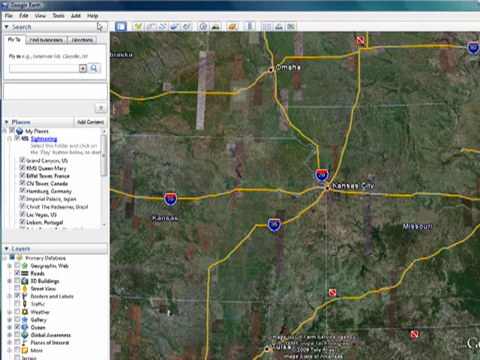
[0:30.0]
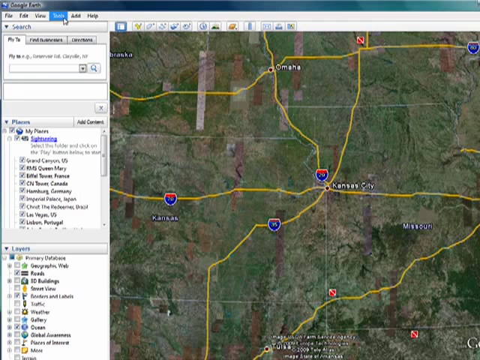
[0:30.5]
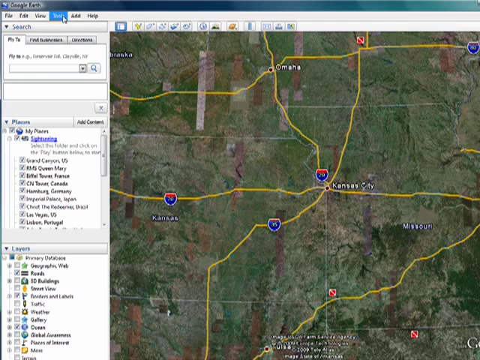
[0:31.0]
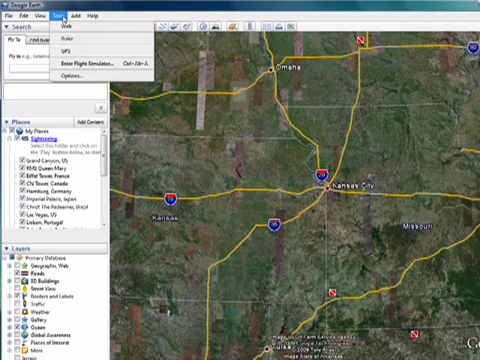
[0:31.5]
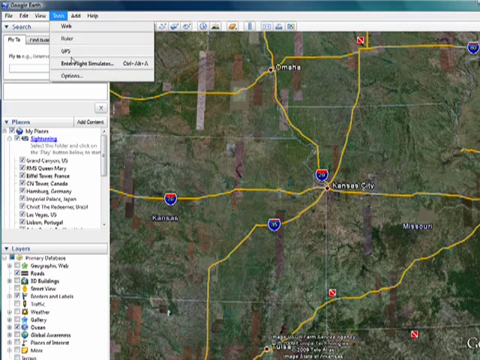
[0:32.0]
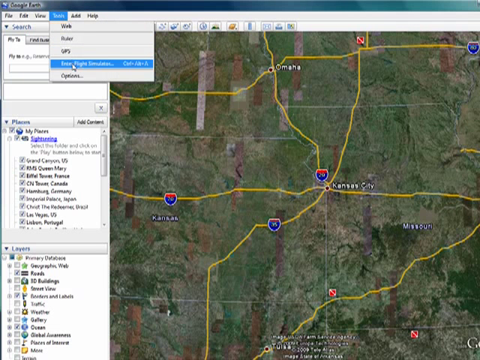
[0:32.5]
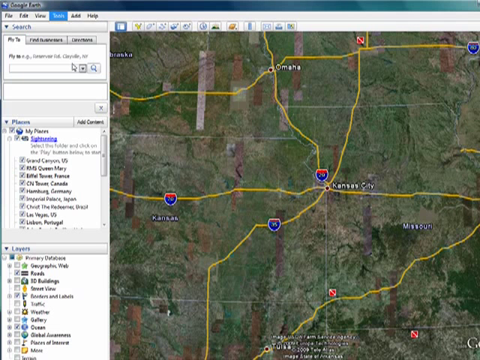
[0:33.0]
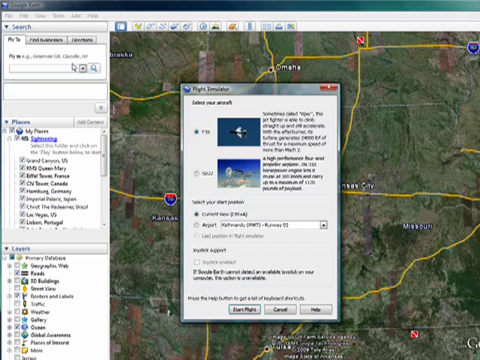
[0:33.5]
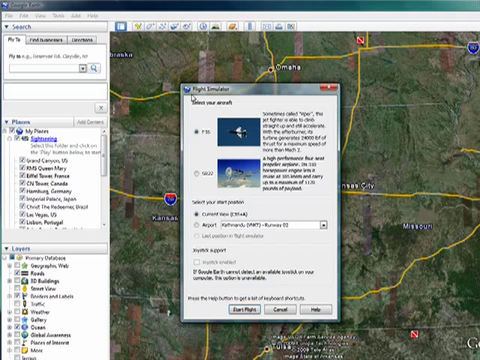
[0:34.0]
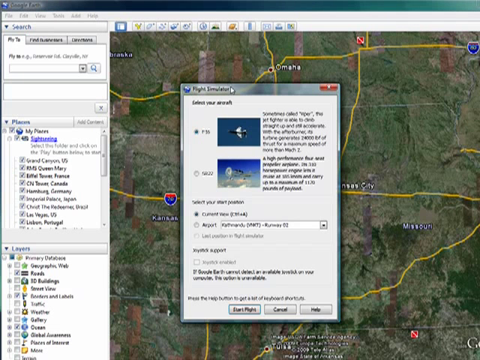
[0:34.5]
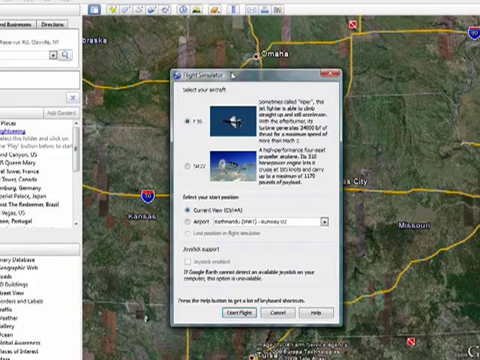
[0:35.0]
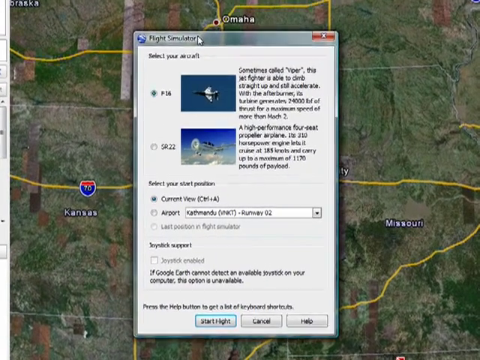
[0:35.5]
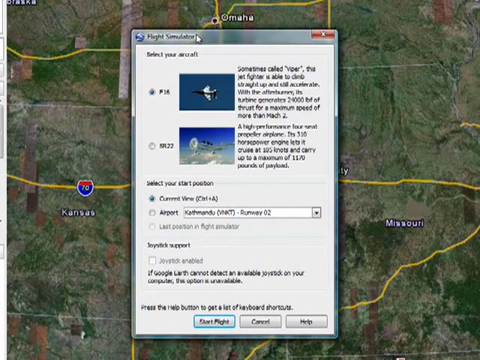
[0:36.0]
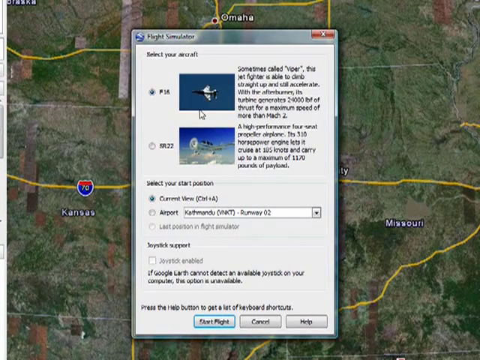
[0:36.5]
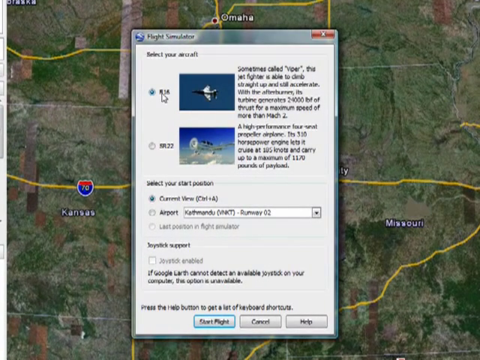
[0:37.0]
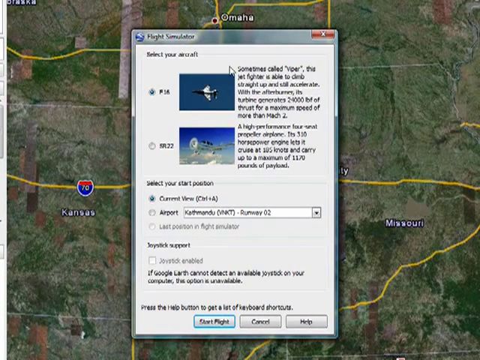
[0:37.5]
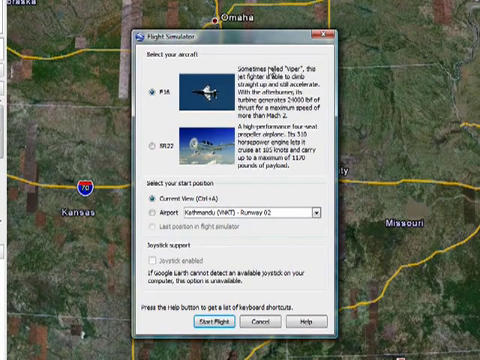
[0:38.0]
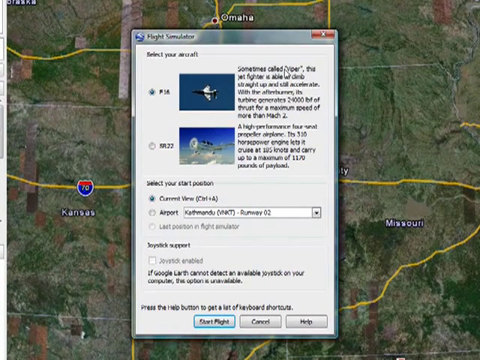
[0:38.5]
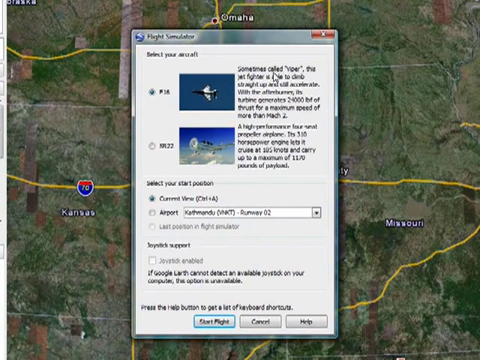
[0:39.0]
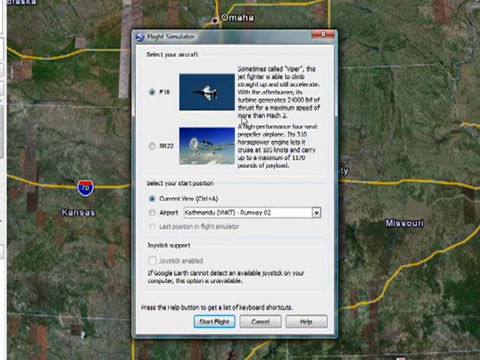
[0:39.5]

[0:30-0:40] The user goes up to the menu in the top left of the screen, clicks on what is apparently the table option, and then clicks on flight simulator. The screen that appears has two options: one seems to be some kind of jet fighter and the other seems to be a slower, more relaxed kind of plane. There is a description of both planes in this menu, though it cannot be read exactly; one of them apparently contains the speed and the height at which the plane flies.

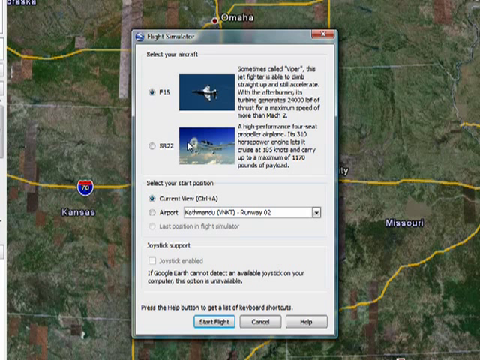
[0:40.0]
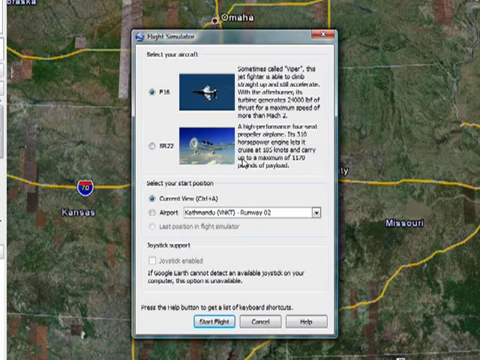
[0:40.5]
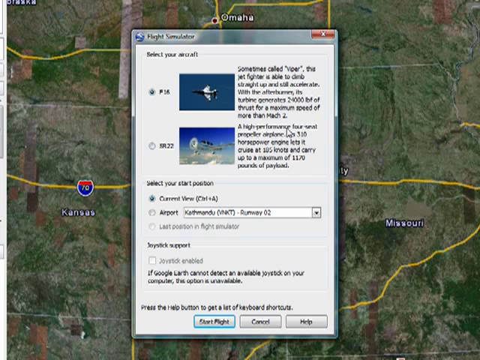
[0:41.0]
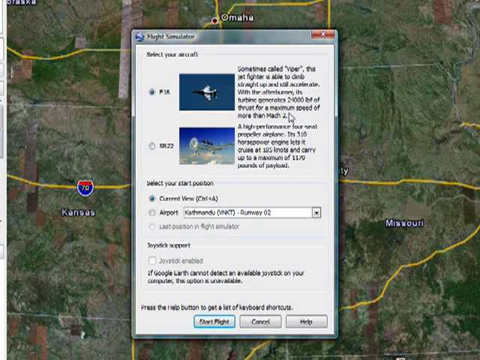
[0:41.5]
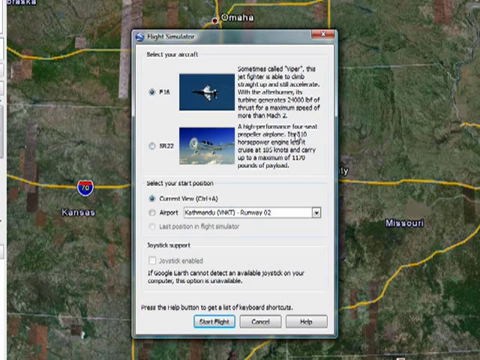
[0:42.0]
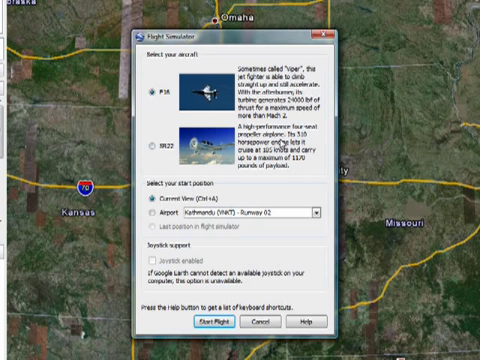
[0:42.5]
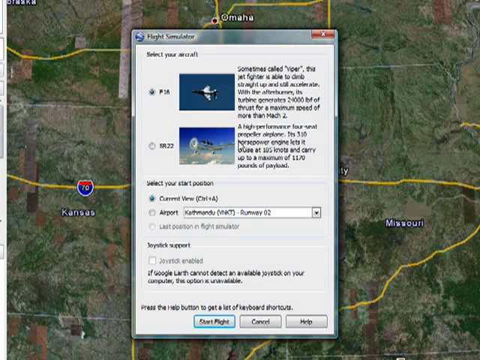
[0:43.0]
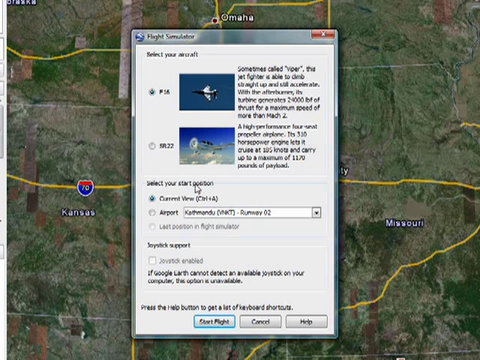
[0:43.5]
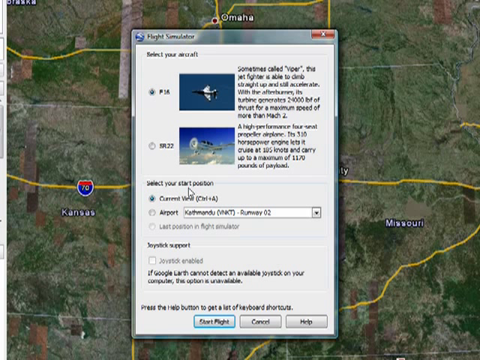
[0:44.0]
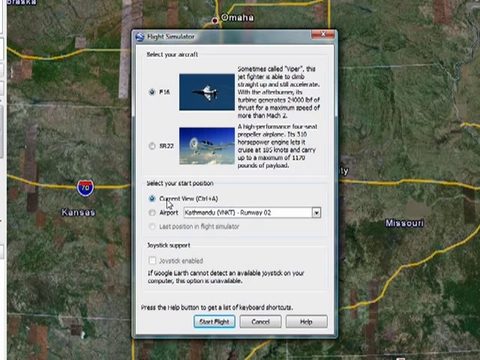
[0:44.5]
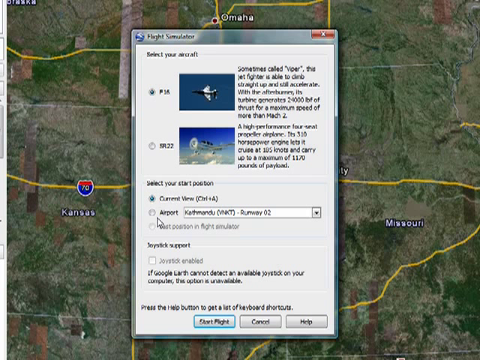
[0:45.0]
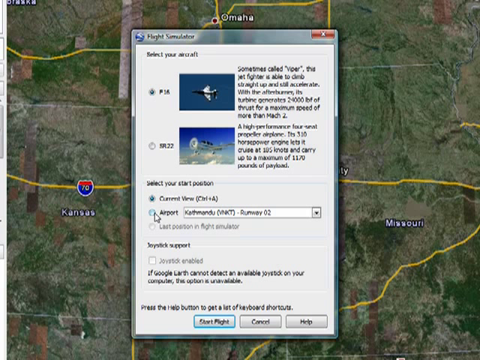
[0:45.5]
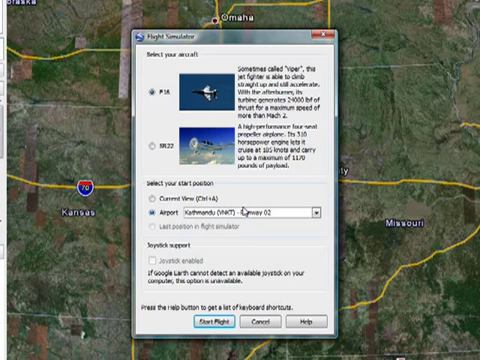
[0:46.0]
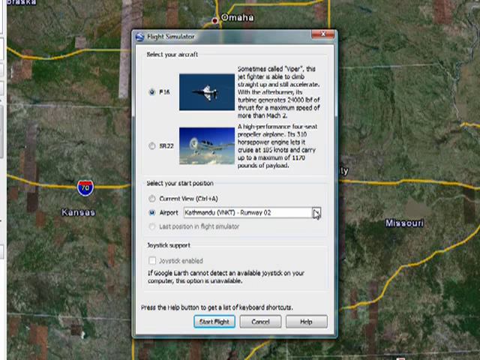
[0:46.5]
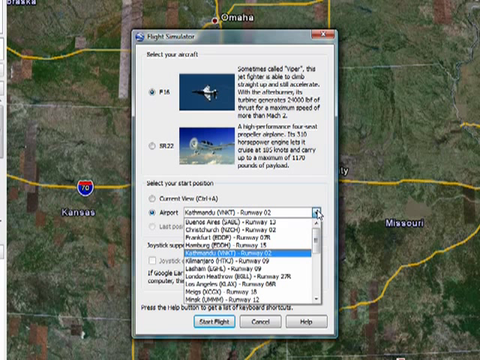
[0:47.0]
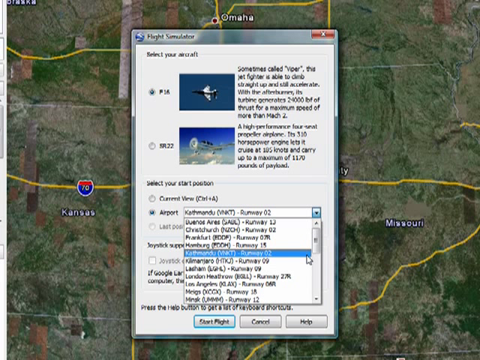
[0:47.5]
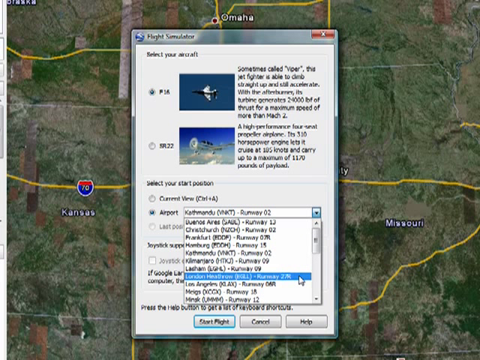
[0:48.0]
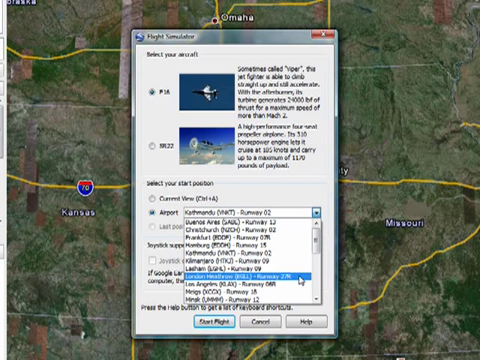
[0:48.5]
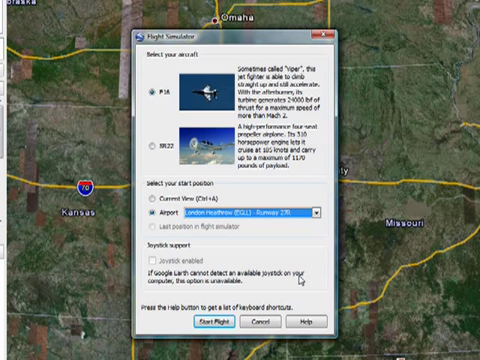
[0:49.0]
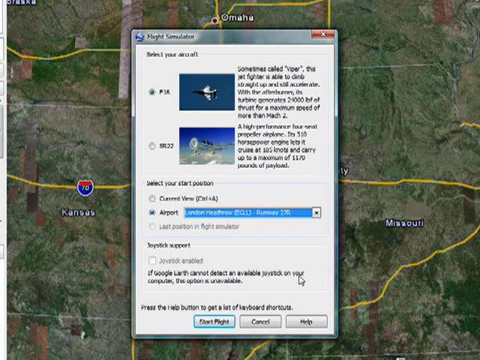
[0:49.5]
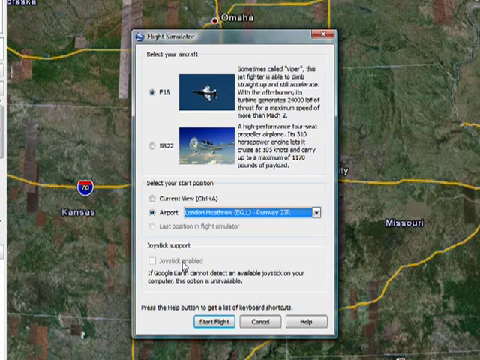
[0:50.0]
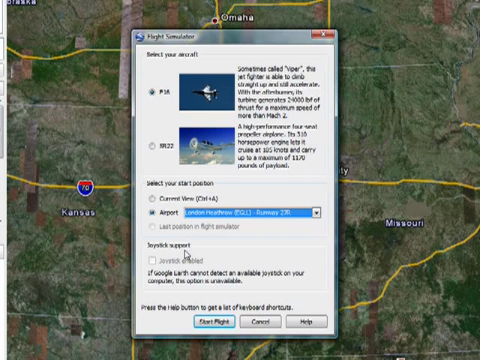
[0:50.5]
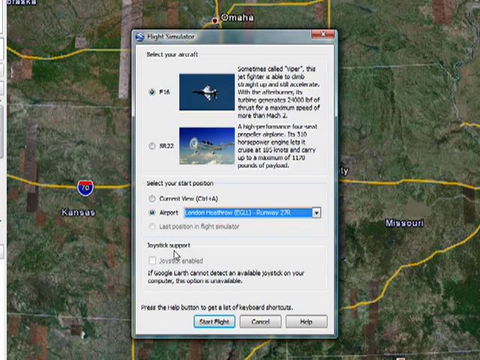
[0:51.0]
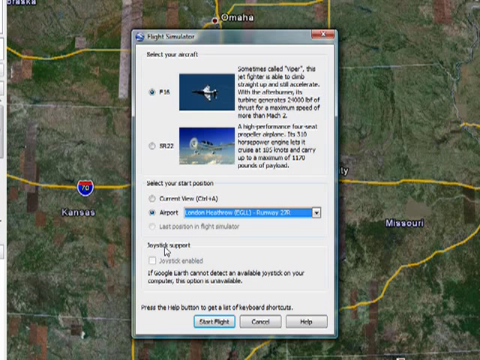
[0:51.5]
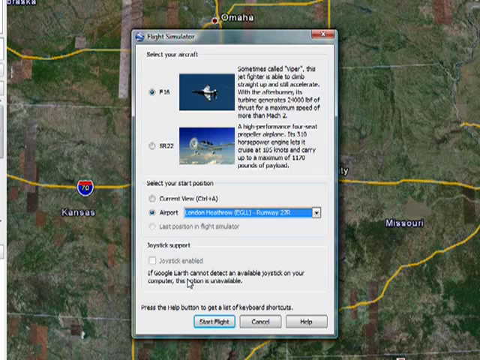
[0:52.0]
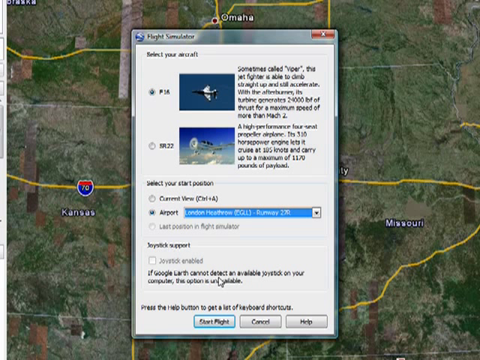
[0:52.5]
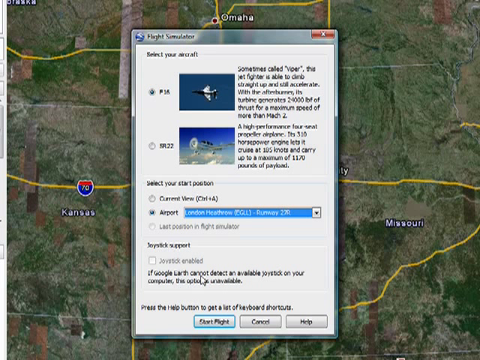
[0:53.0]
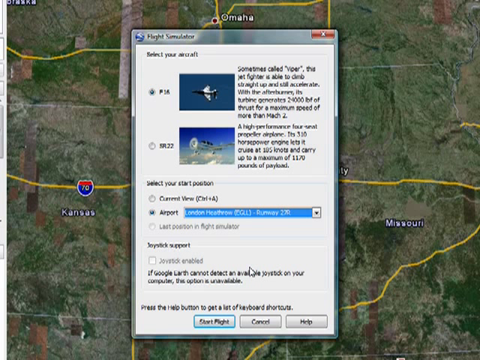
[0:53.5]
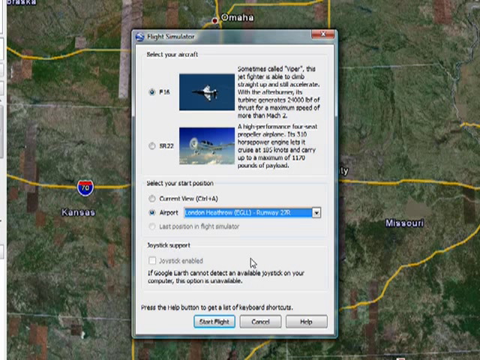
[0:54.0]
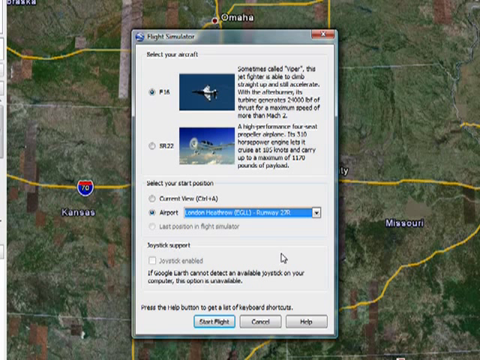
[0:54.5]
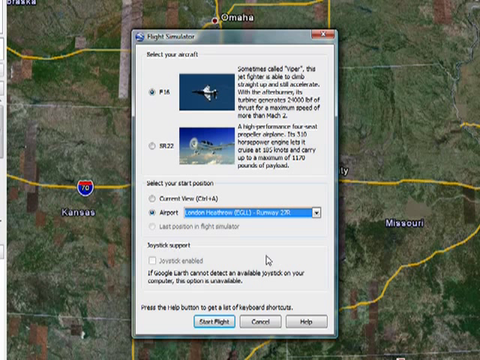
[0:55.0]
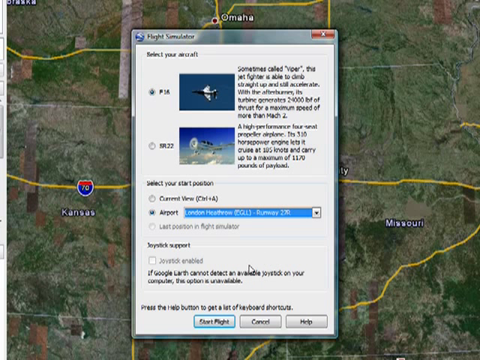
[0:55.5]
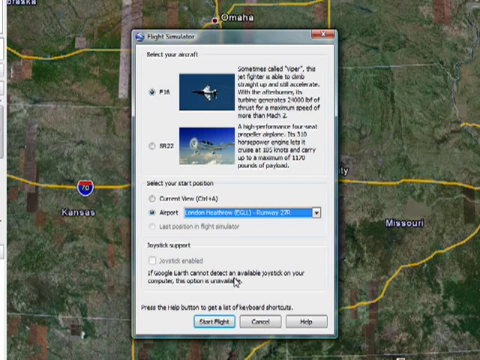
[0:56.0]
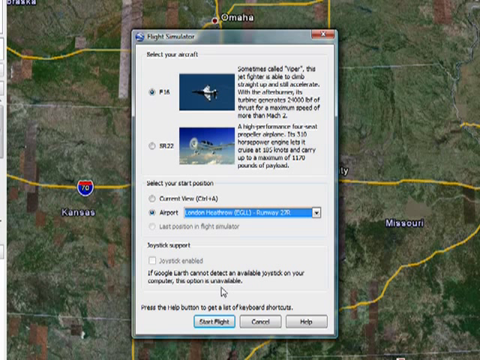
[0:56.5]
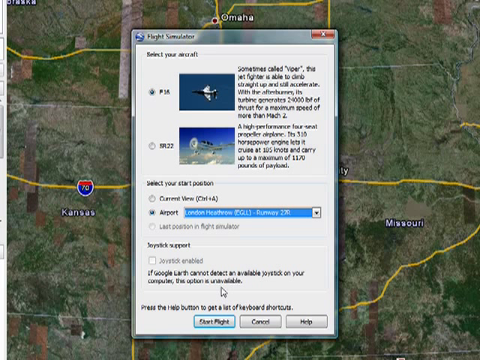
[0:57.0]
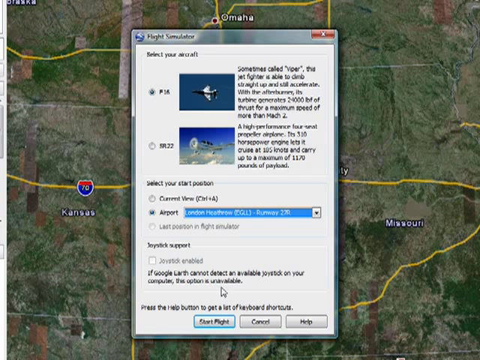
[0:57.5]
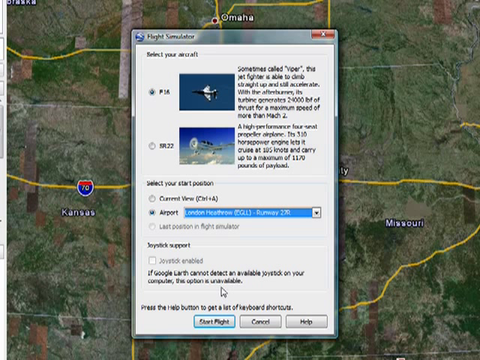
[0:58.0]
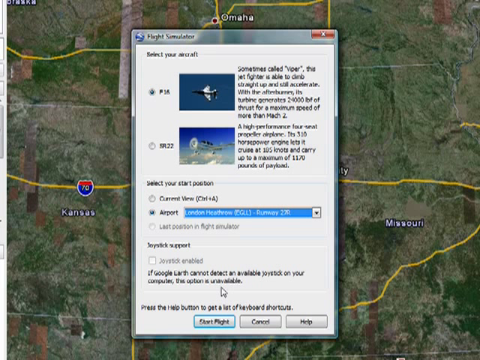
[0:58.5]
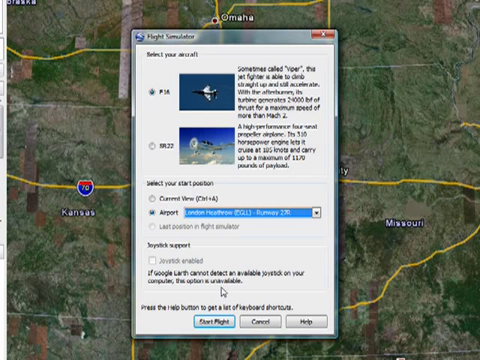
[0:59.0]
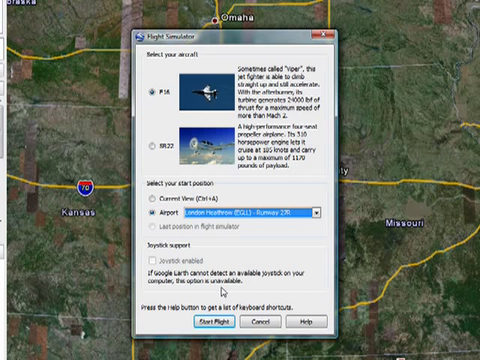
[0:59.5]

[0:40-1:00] The top jet is highlighted as the default, and the mouse cursor moves below the two images of the jets toward a menu section that says "select your start position". The two options there are current view and airport, and the airport selected in a drop-down menu is currently Kathmandu. The user clicks on the drop-down and selects London Heathrow instead, apparently with "Runway 27R". The mouse wiggles around some more. The bottom section is about joystick support and whether the joystick is enabled, but it is grayed out. There is a start flight button.